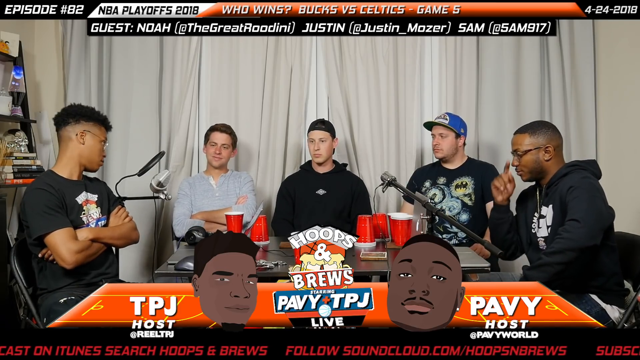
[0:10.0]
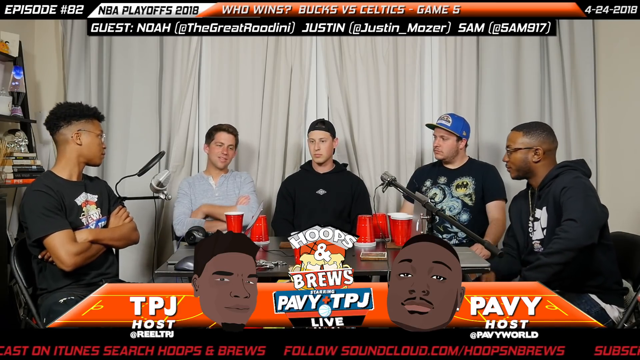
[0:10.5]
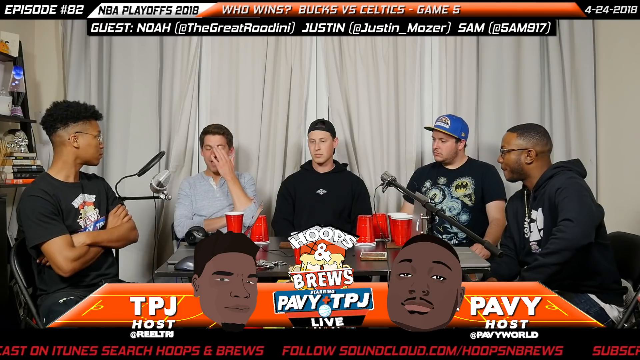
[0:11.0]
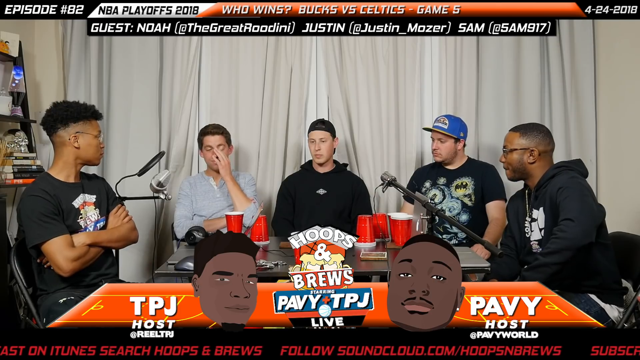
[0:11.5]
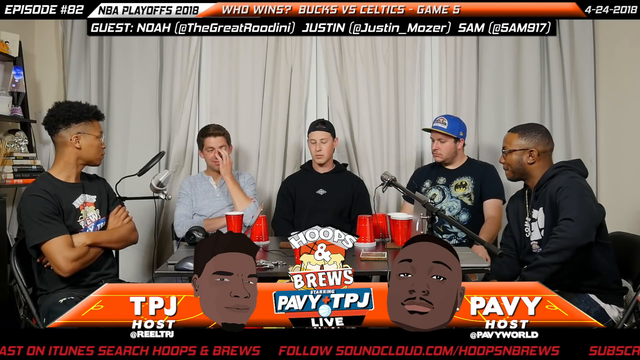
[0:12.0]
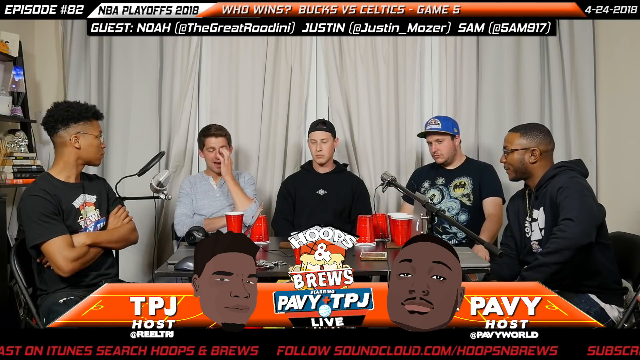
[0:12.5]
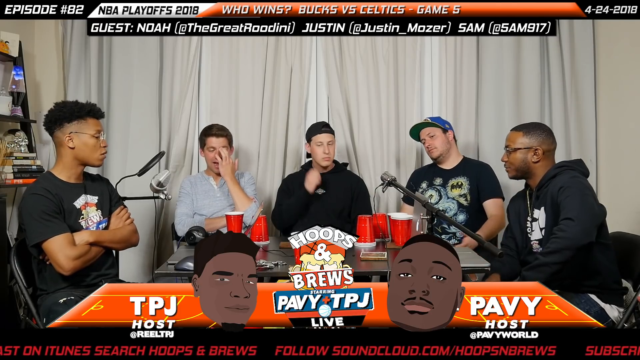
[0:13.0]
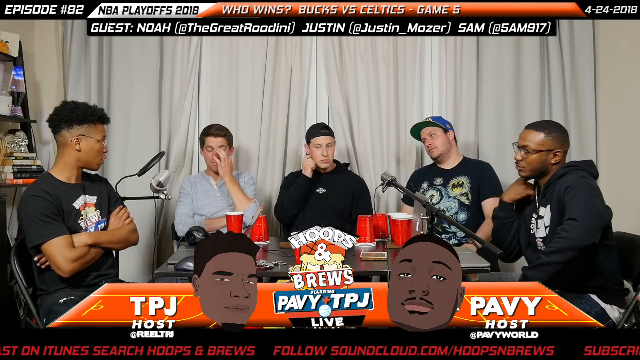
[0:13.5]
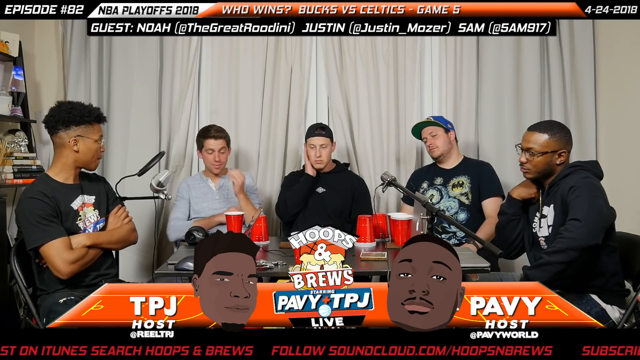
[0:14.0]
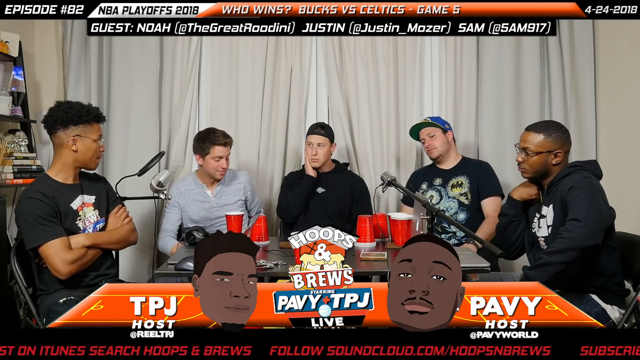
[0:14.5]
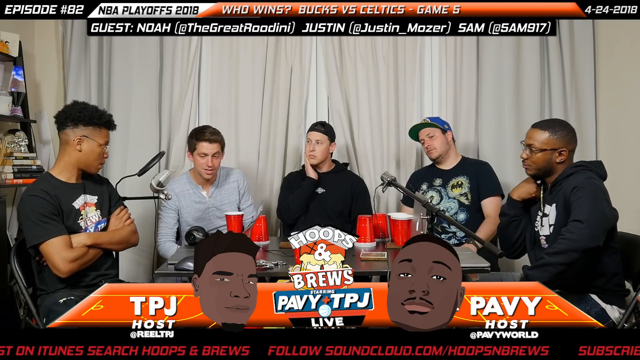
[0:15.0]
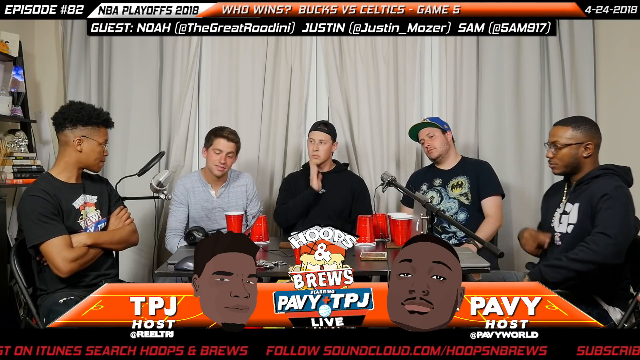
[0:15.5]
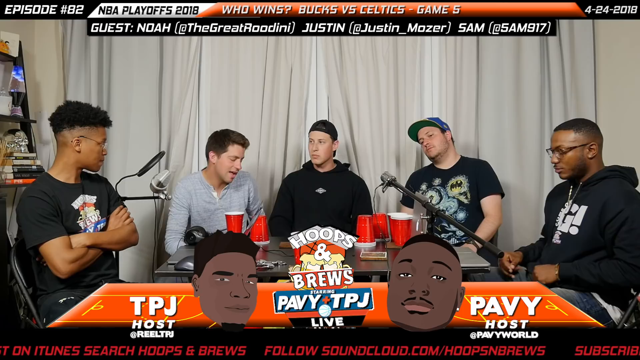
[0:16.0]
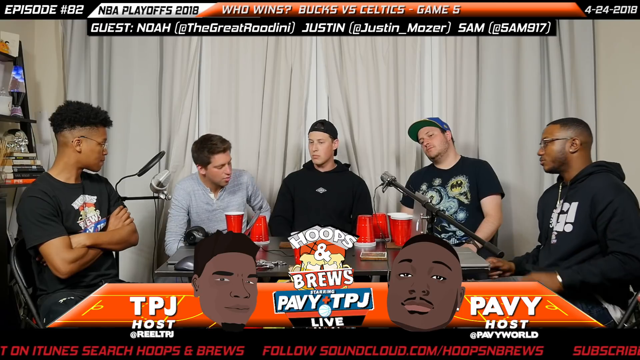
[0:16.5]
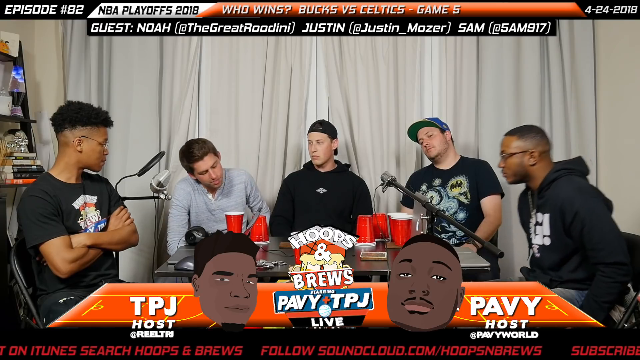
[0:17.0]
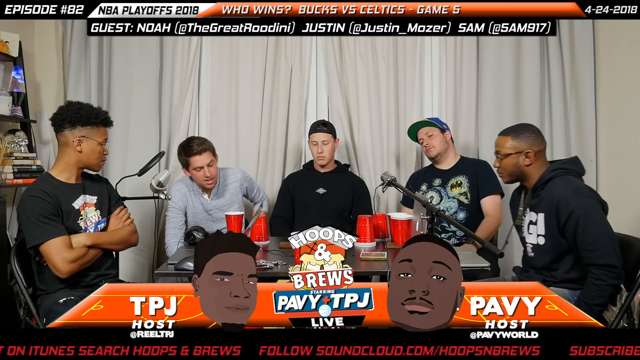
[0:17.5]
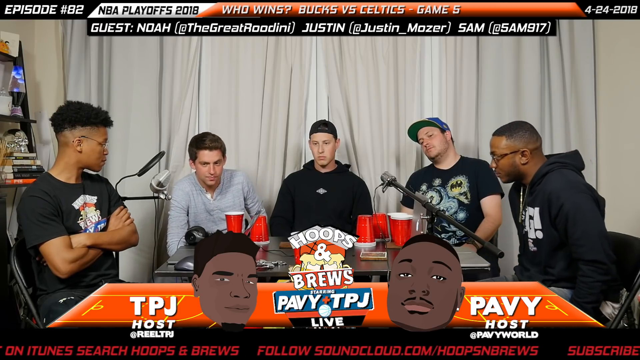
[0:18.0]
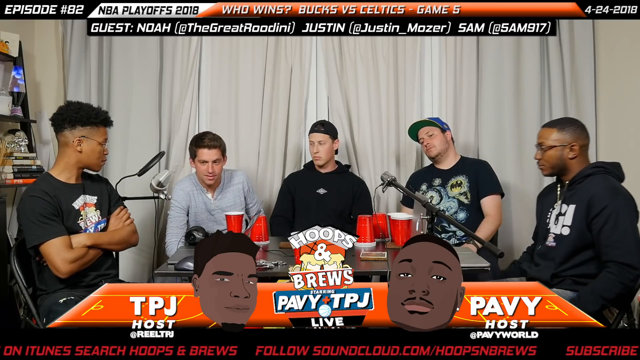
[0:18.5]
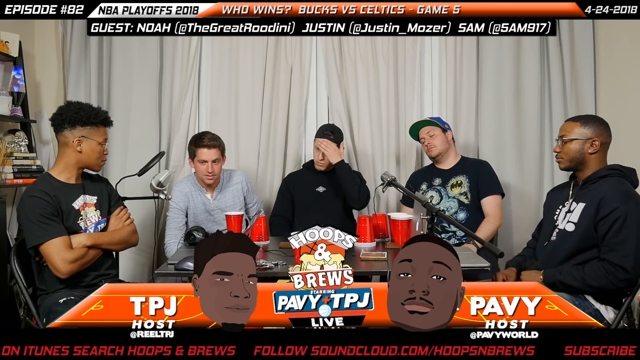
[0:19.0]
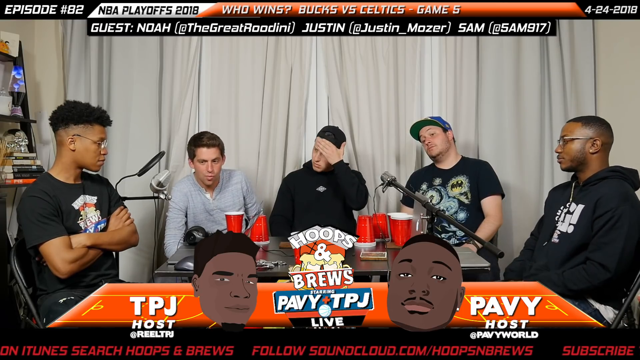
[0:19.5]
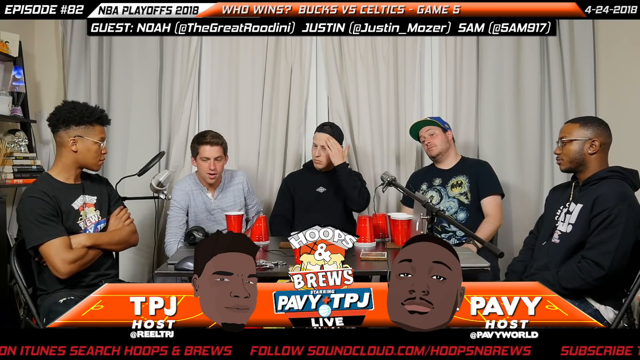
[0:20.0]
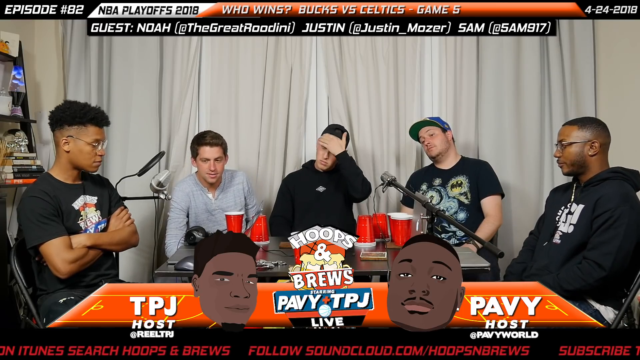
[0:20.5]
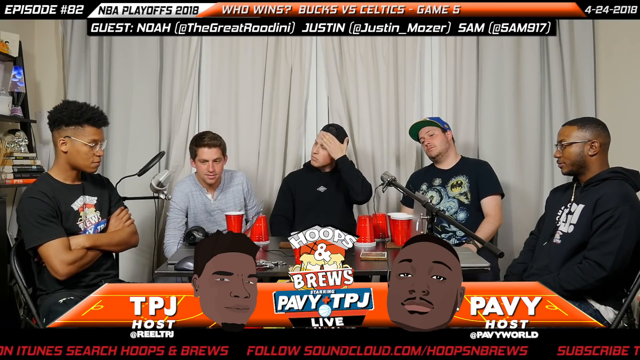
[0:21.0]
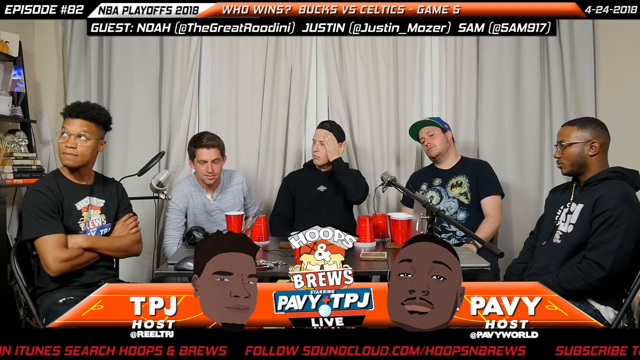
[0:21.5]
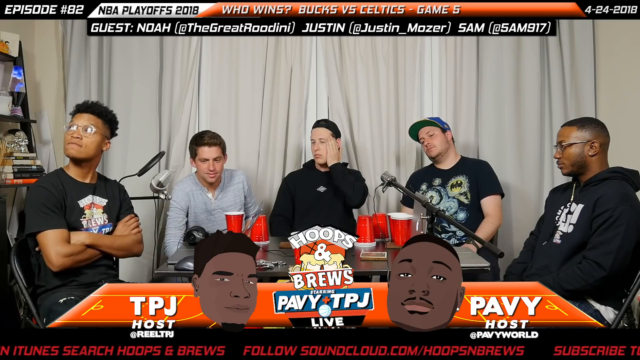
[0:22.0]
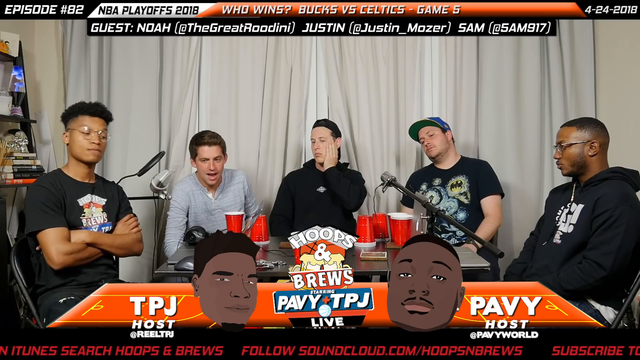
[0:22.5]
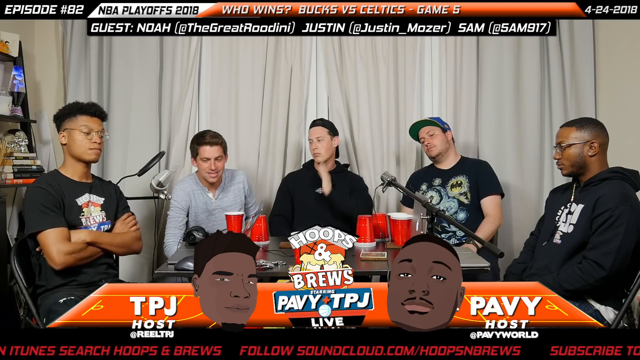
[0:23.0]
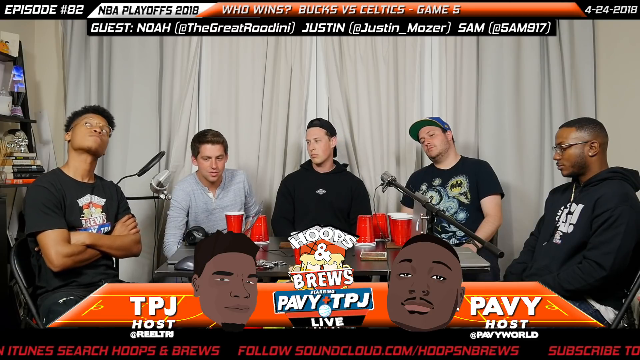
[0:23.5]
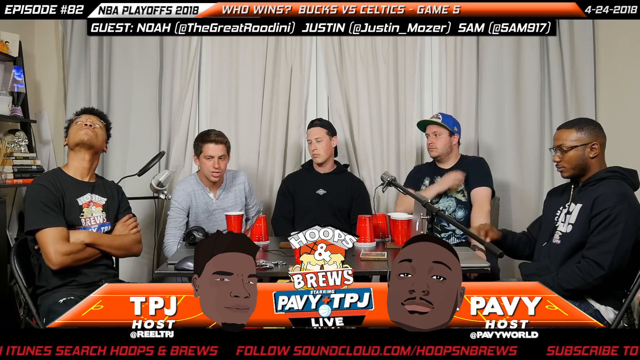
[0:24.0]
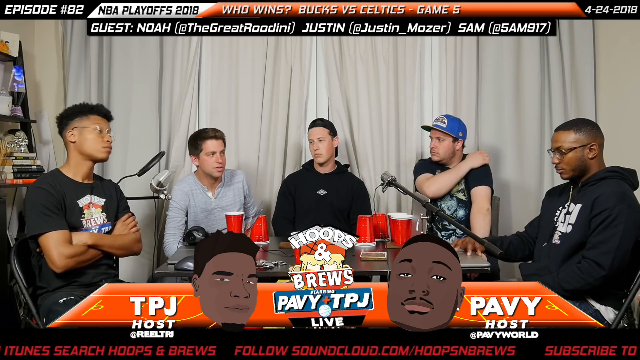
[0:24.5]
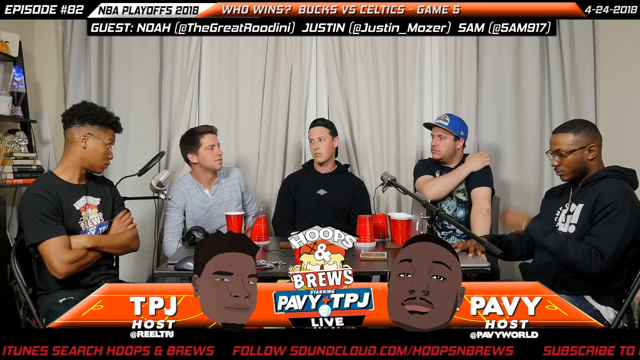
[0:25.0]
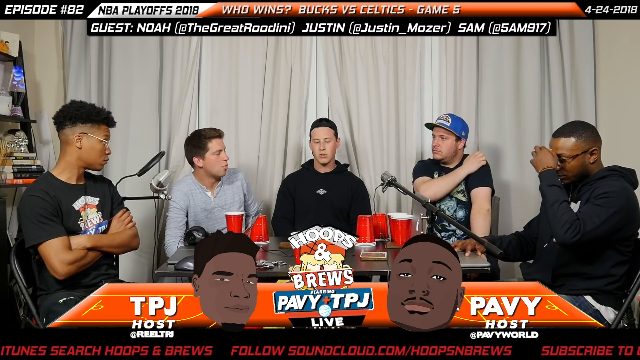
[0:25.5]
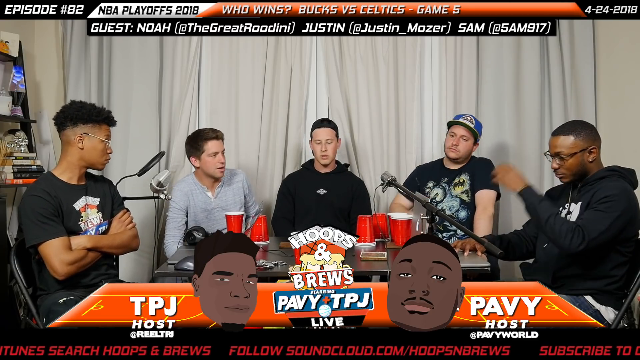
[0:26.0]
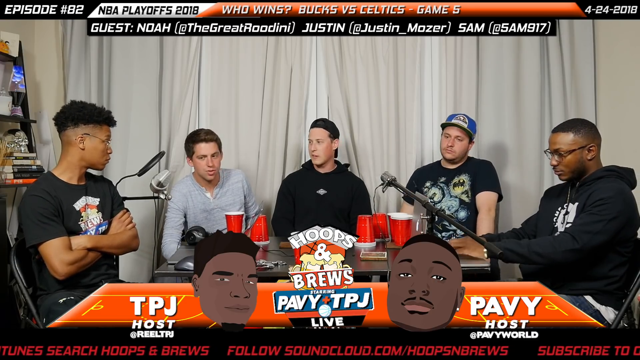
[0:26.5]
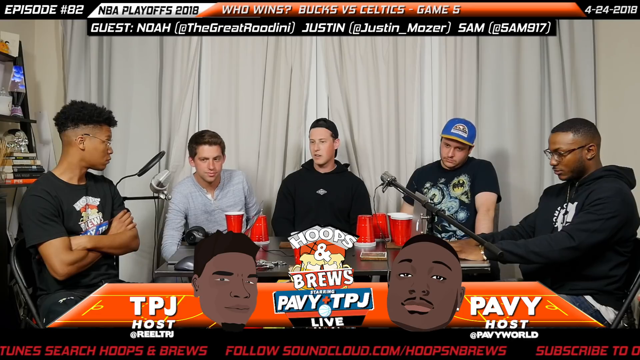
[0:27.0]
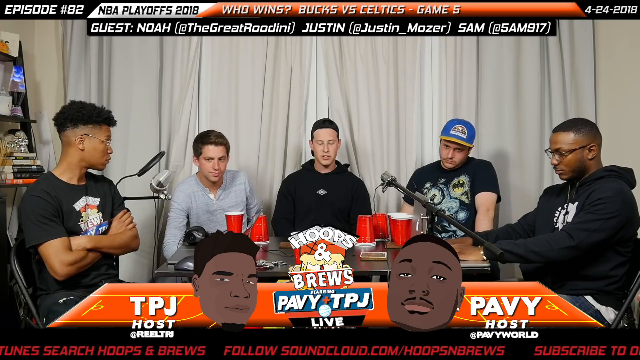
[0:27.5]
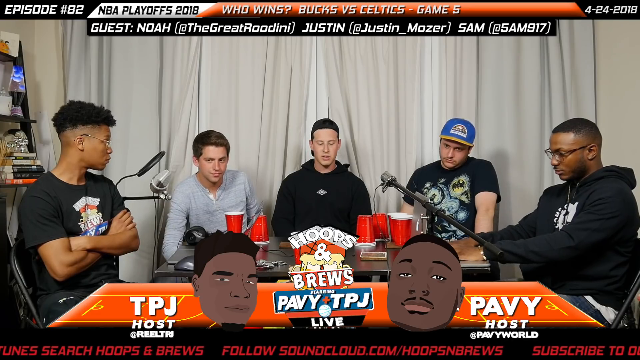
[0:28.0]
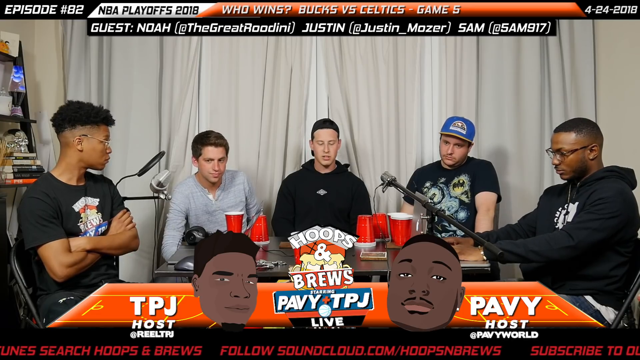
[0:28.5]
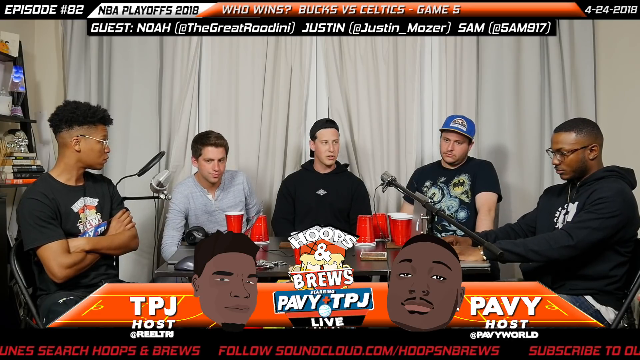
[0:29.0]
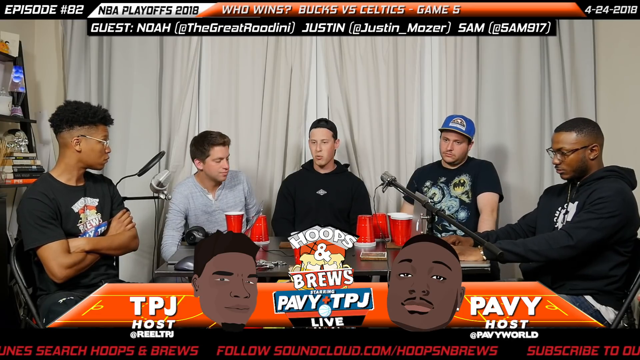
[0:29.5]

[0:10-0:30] Five people take part in a podcast called Hoops and Brews, apparently about basketball. Basketball players are shown playing each other. A cartoon basketball appears in the background, and text mentions TBJ. The game being analyzed is the Bucks versus Celtics, game five. Text at the very top of the screen mentions 2018.